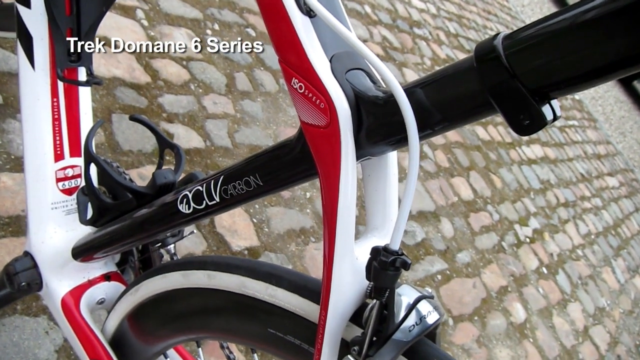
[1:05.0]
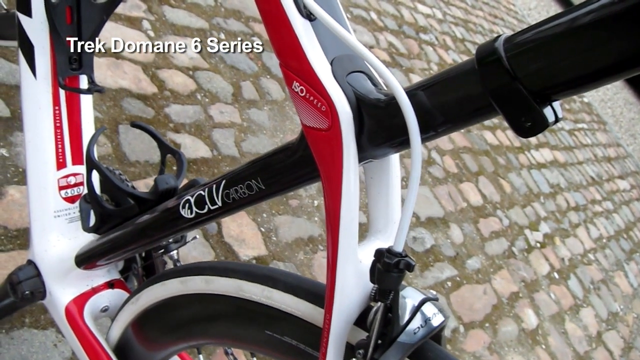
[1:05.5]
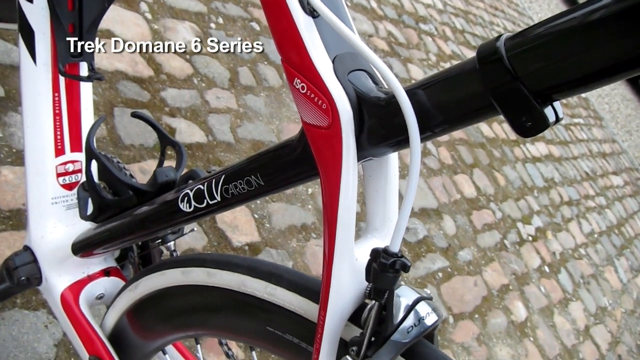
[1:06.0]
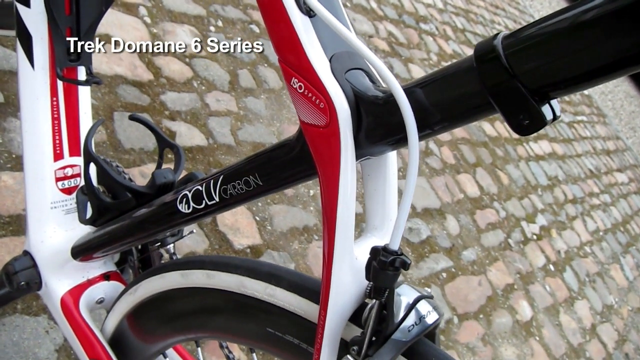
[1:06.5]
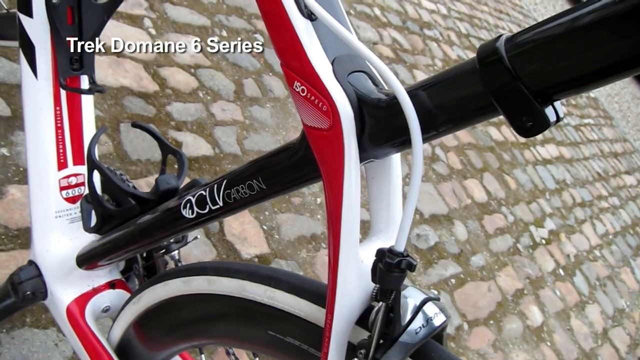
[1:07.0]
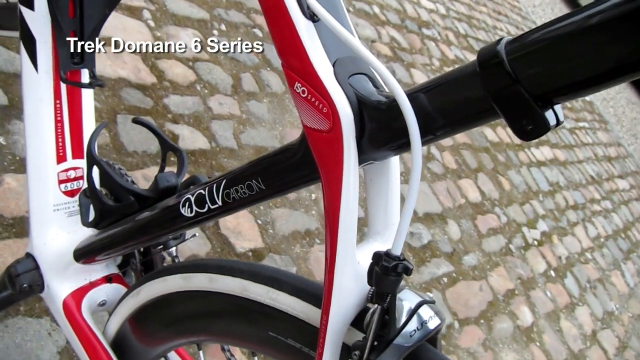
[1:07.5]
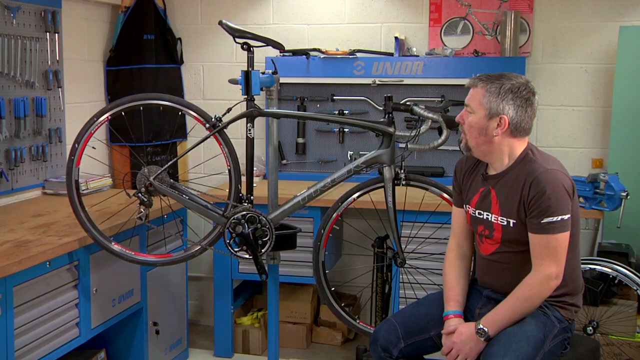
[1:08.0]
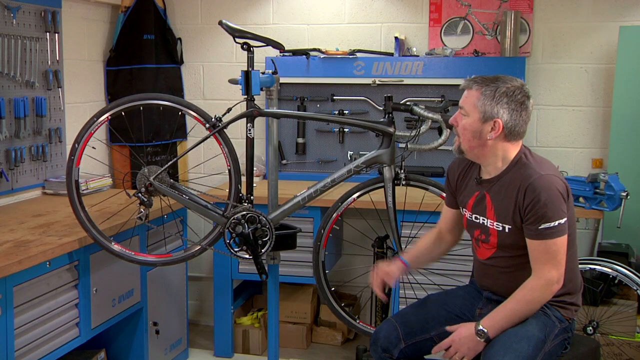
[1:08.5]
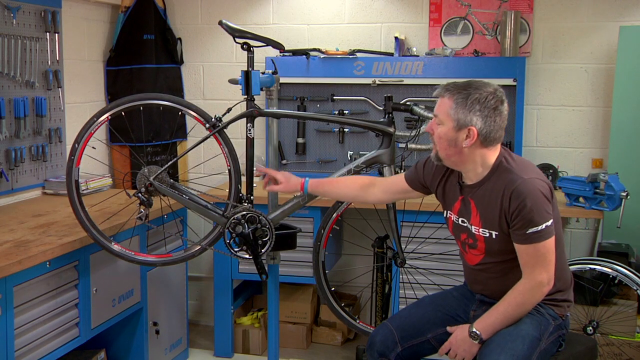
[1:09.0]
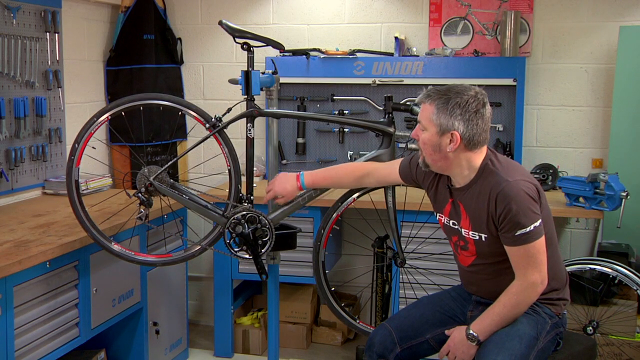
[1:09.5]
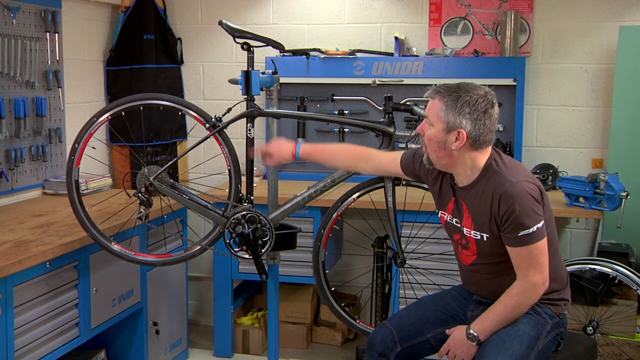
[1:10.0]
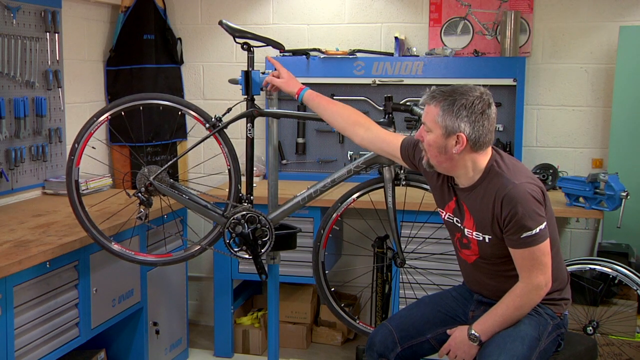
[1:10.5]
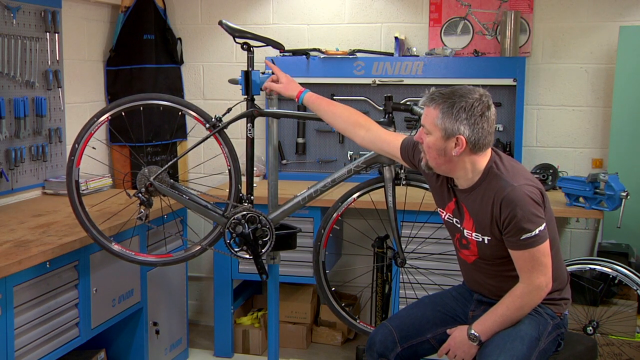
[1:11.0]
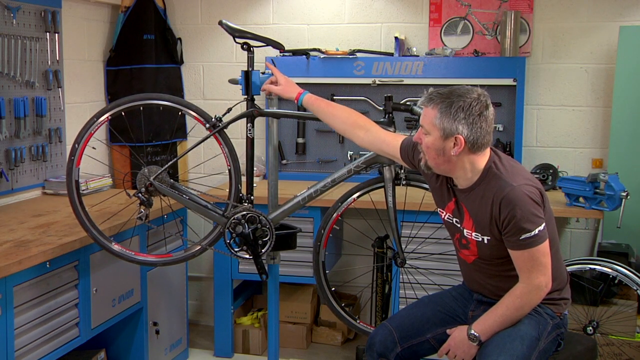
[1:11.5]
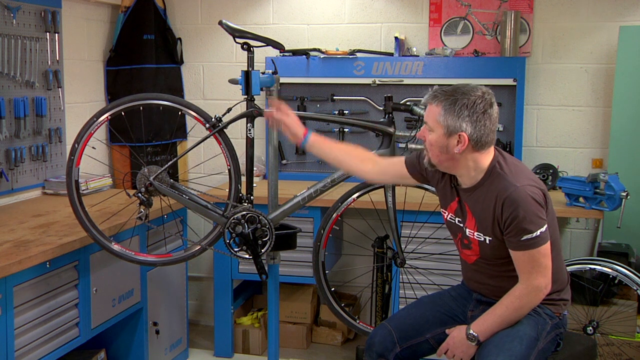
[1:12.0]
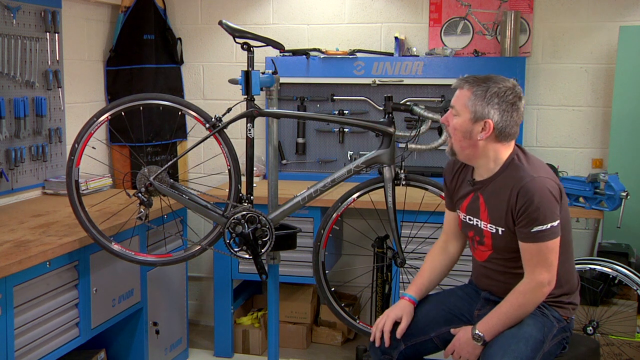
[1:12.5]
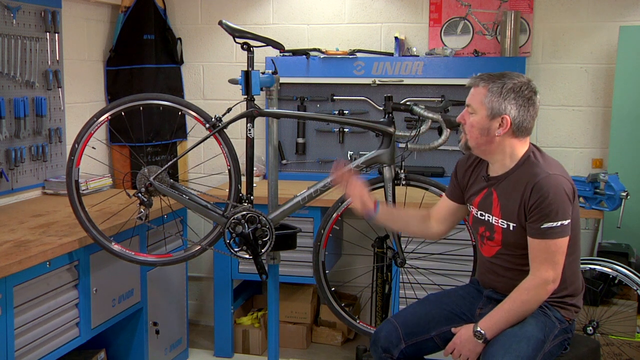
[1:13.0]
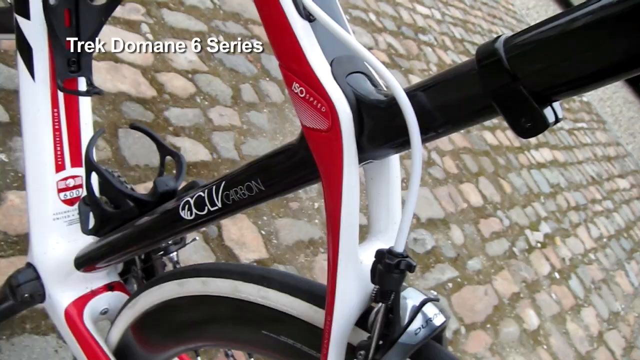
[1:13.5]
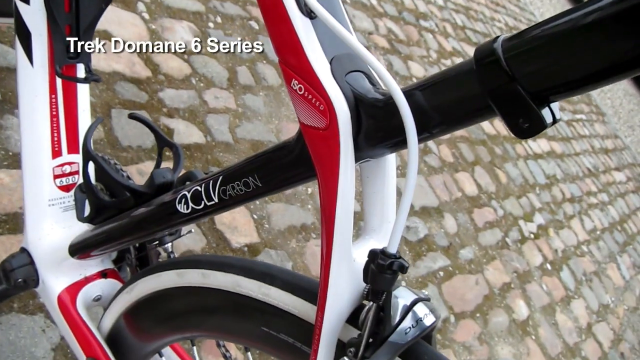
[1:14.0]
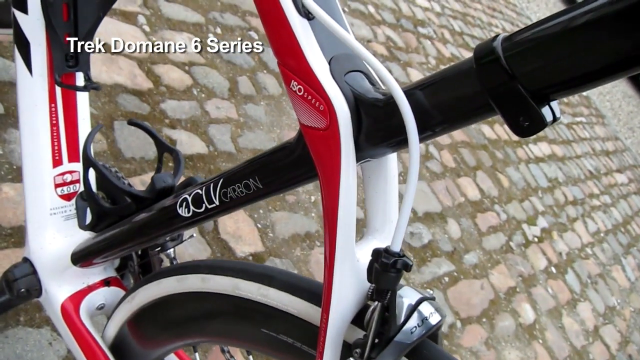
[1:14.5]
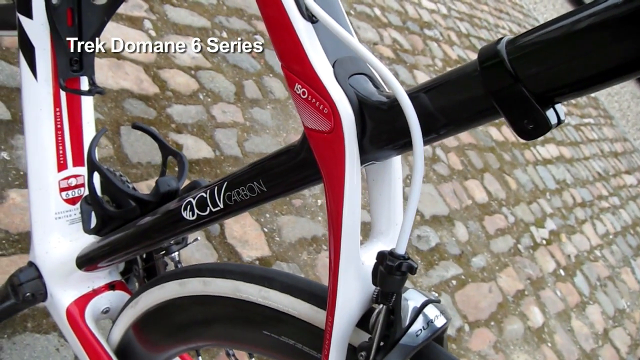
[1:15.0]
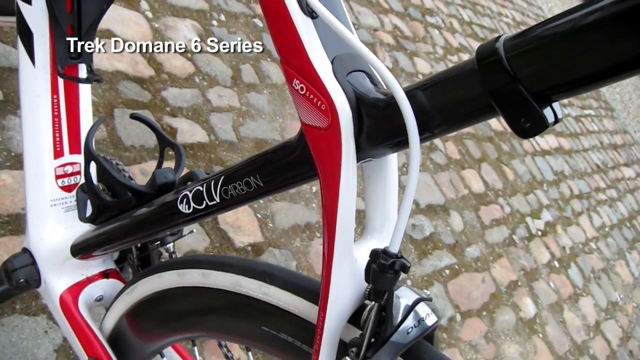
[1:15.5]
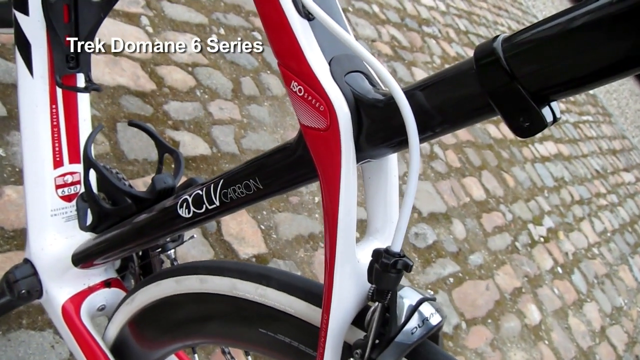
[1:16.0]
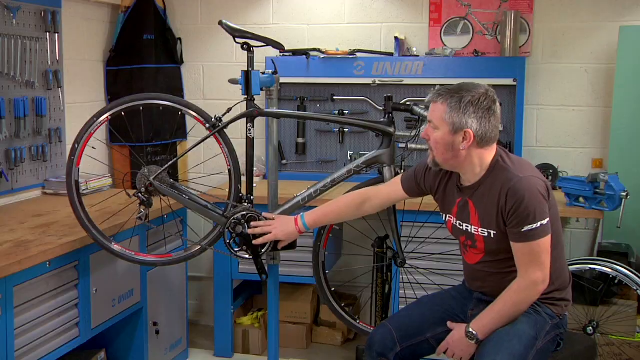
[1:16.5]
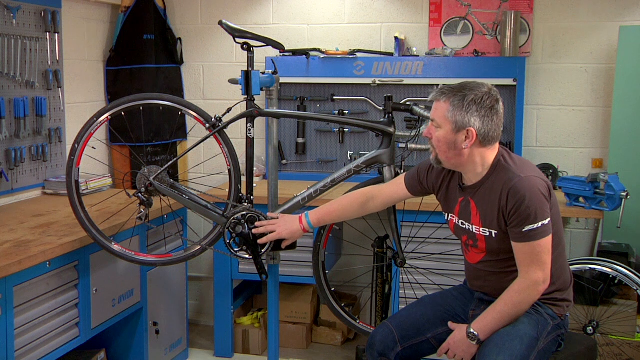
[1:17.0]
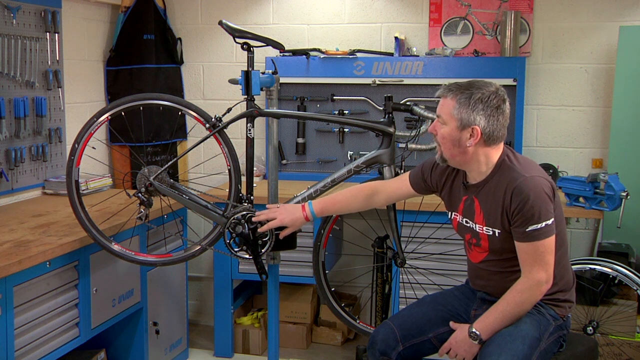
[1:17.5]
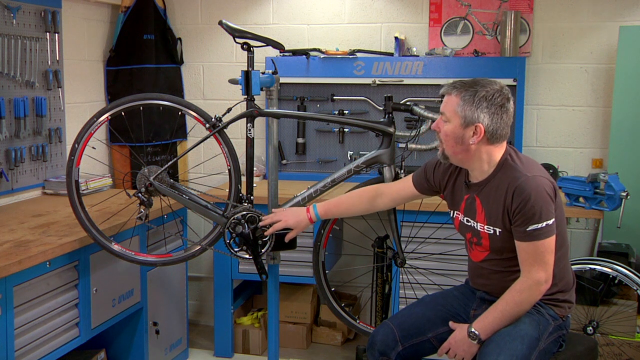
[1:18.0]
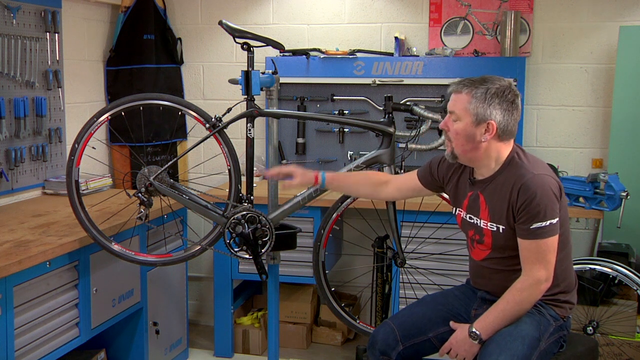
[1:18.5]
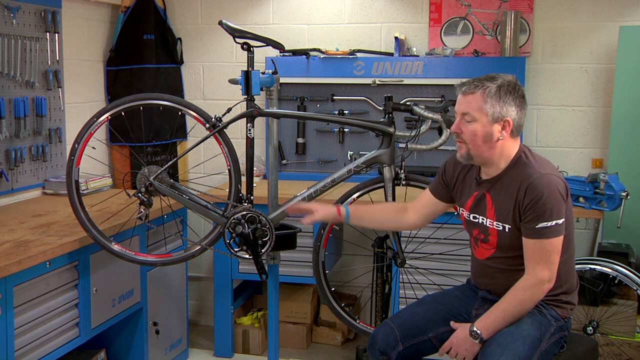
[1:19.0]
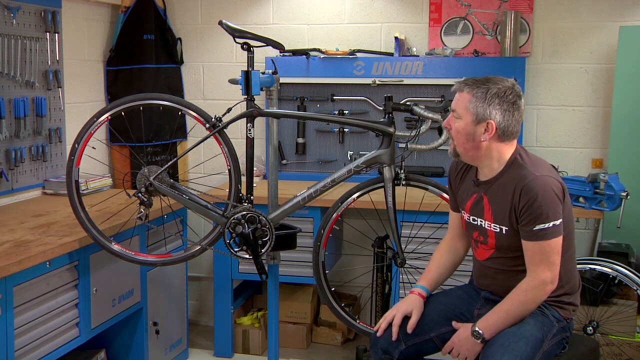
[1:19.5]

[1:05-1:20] The video shows the other bike, apparently an OCLV carbon bike, with a white, red and black frame, zoomed in so the whole bike cannot be seen. The images flip between that frame and the gray Trek Domain bike in the workshop, where the seated gentleman points to things on the gray bike while talking about them. There seems to be a lot of pointing to the area where the seat pin goes into the bike frame, and the white and red bike also seems to be zoomed in on that part, apparently as a comparison between the two.